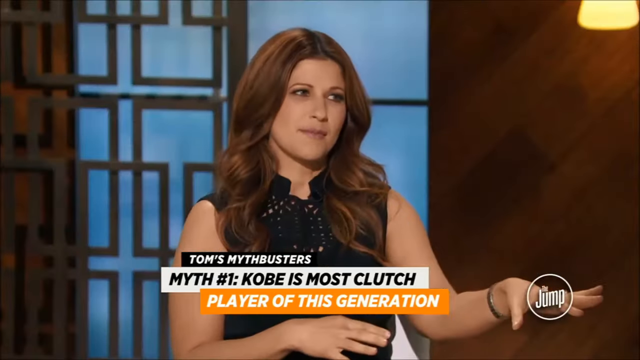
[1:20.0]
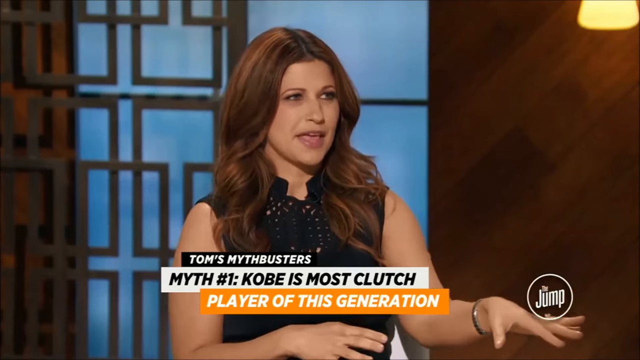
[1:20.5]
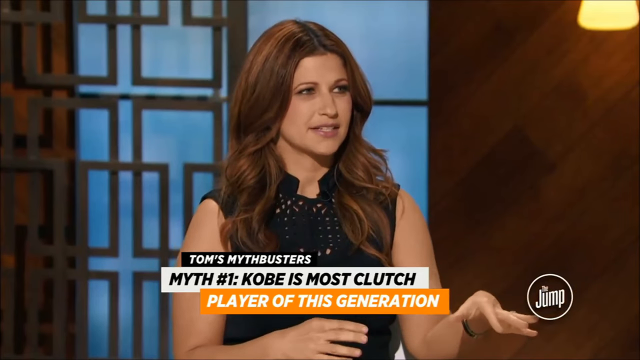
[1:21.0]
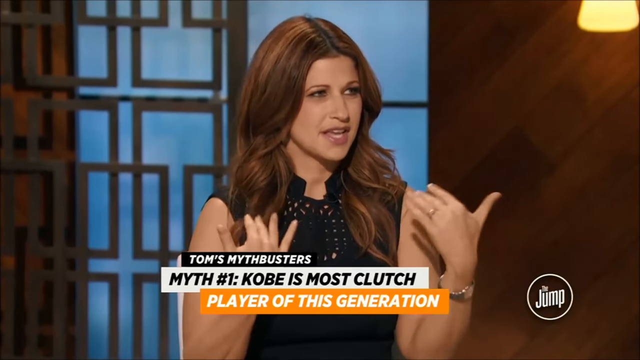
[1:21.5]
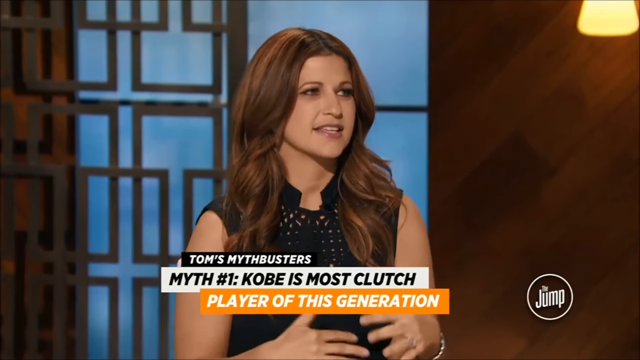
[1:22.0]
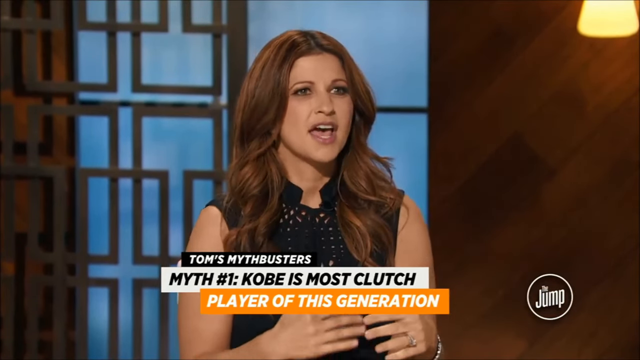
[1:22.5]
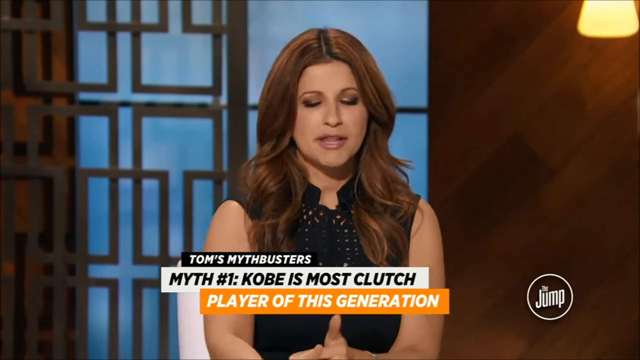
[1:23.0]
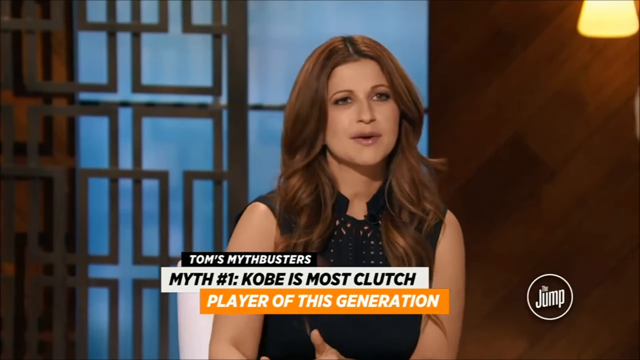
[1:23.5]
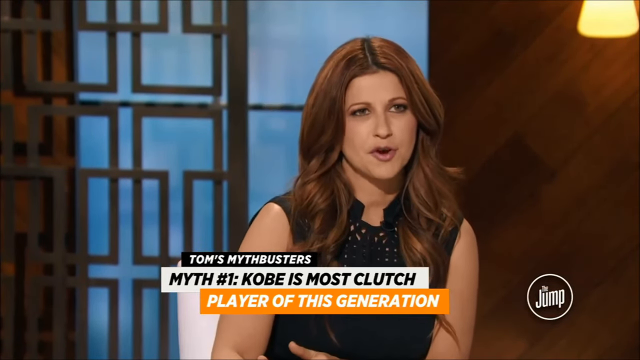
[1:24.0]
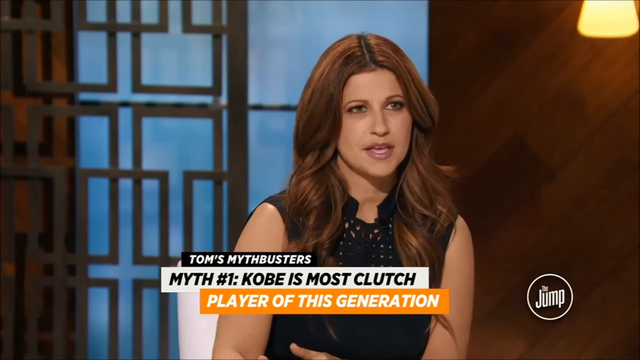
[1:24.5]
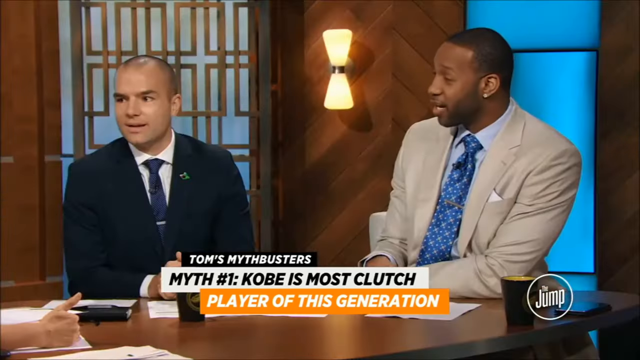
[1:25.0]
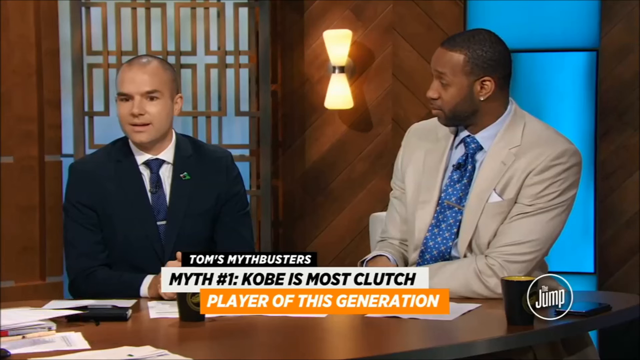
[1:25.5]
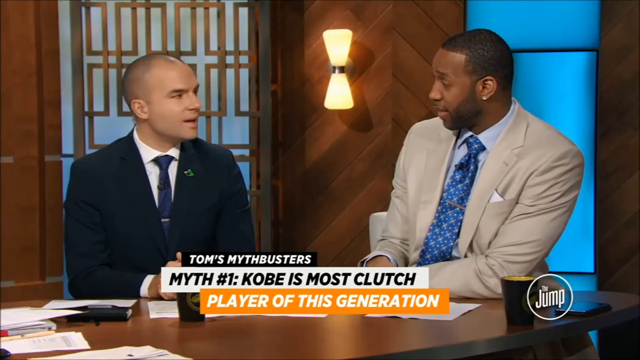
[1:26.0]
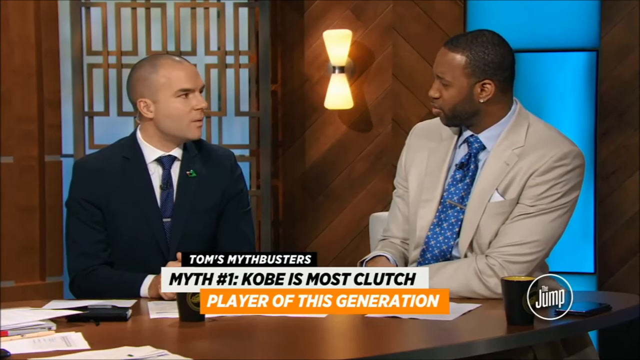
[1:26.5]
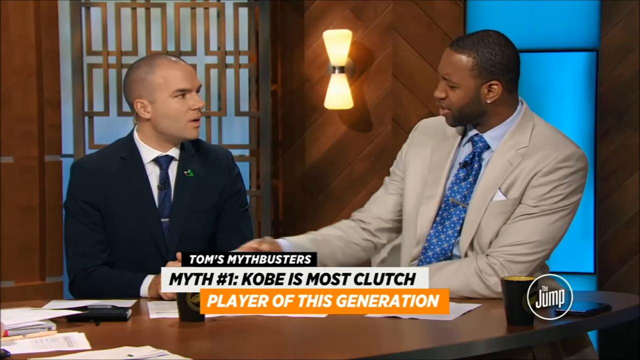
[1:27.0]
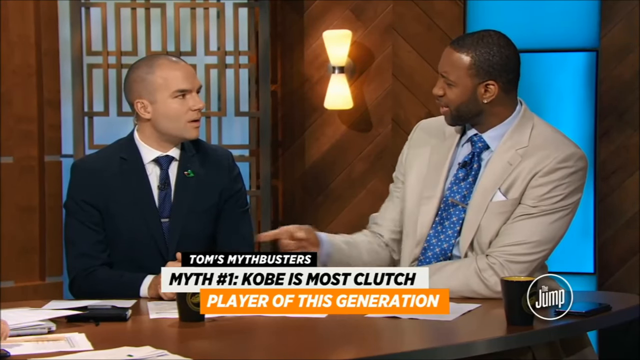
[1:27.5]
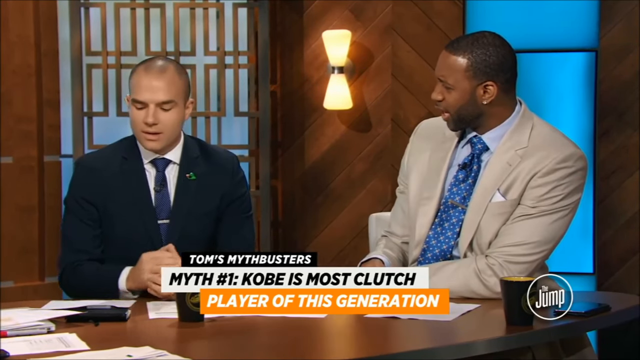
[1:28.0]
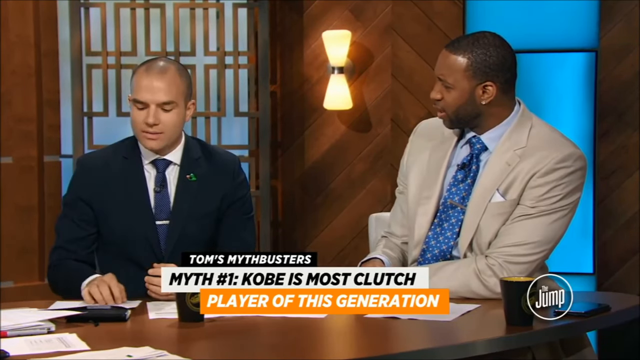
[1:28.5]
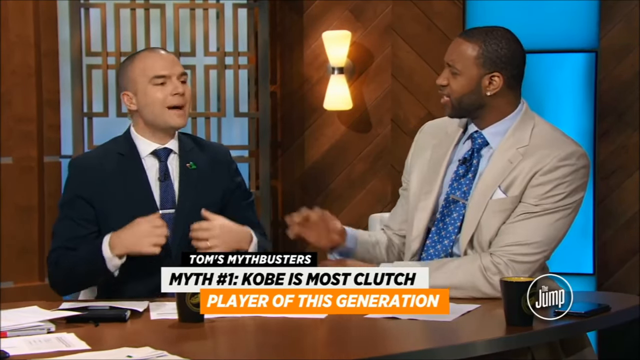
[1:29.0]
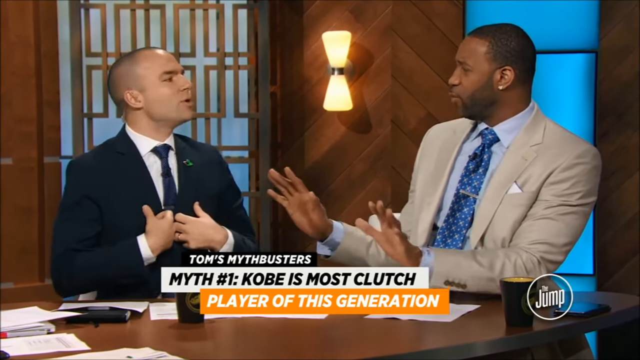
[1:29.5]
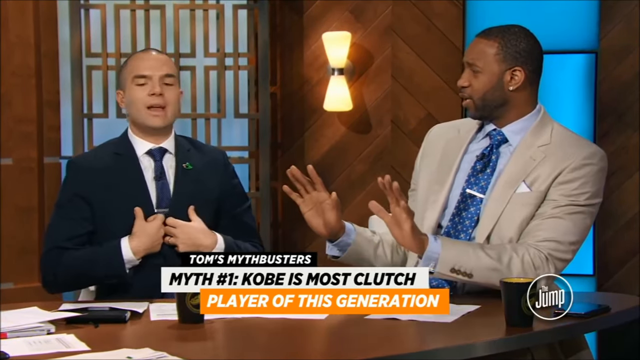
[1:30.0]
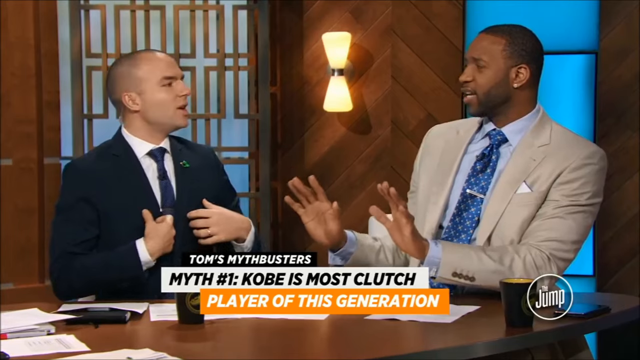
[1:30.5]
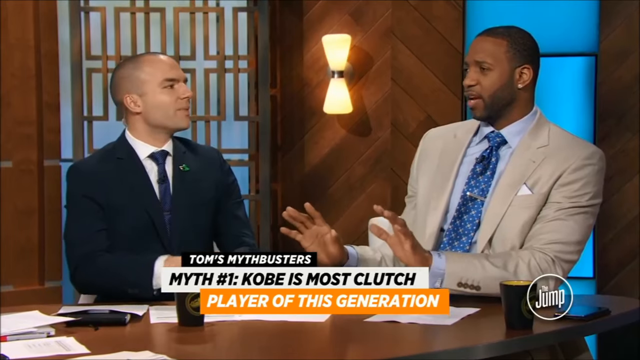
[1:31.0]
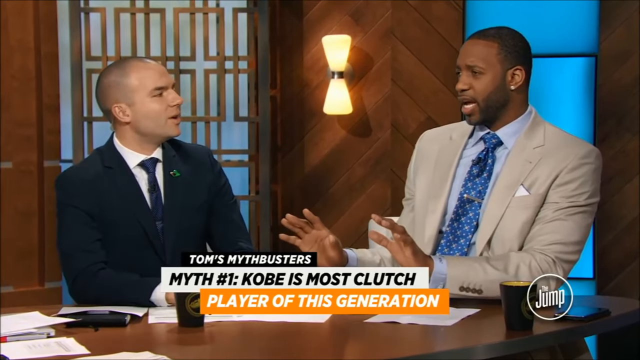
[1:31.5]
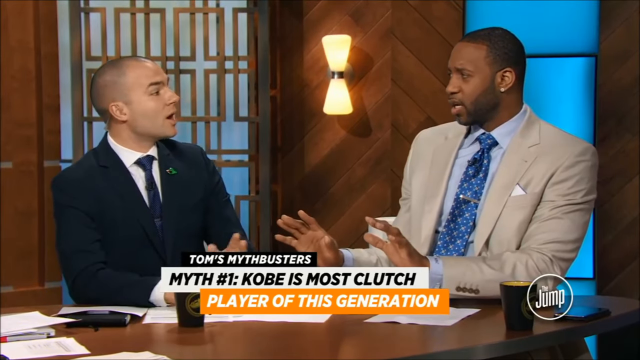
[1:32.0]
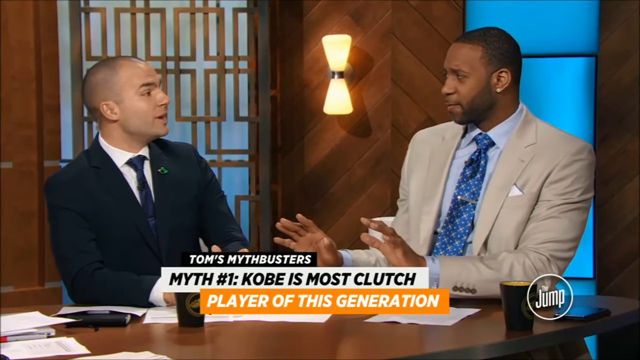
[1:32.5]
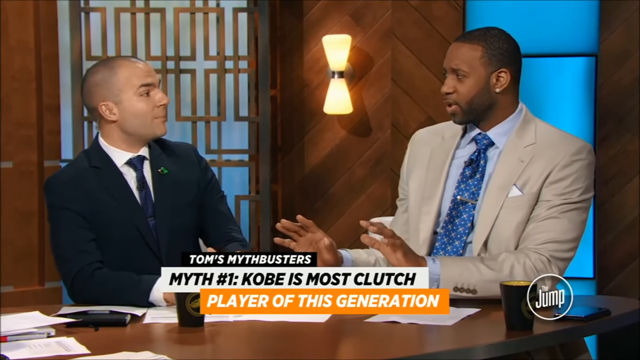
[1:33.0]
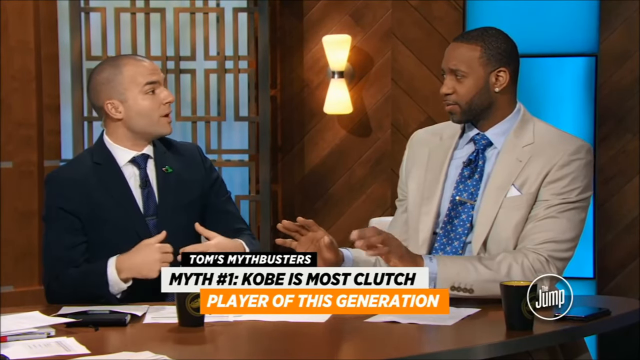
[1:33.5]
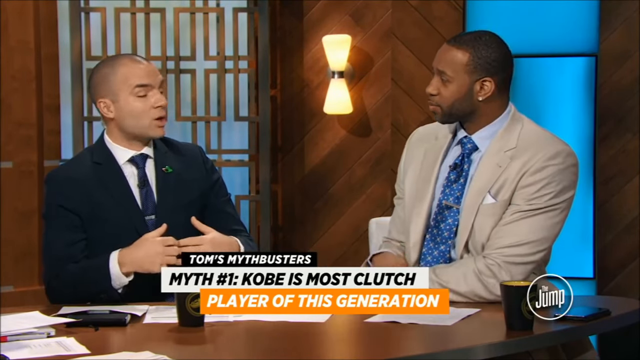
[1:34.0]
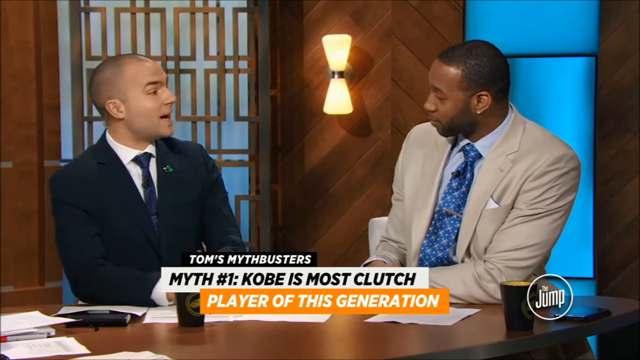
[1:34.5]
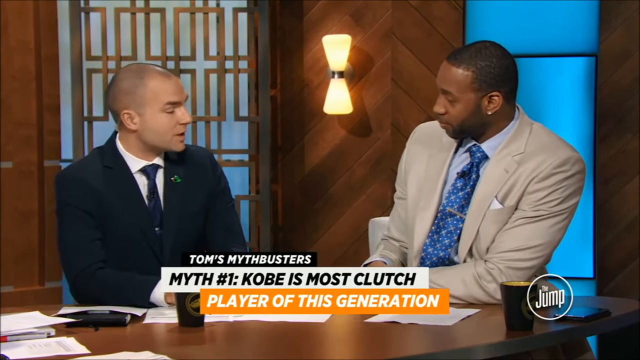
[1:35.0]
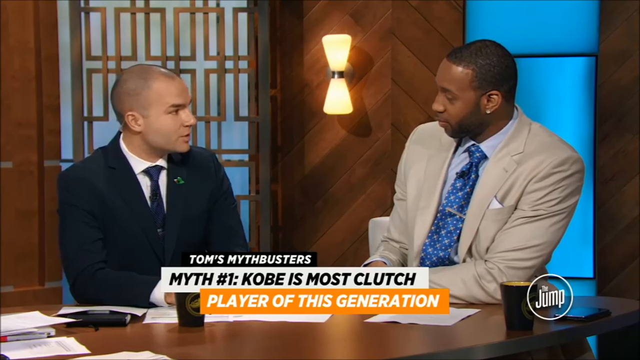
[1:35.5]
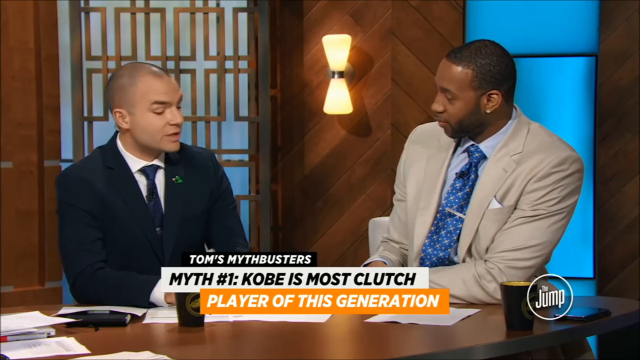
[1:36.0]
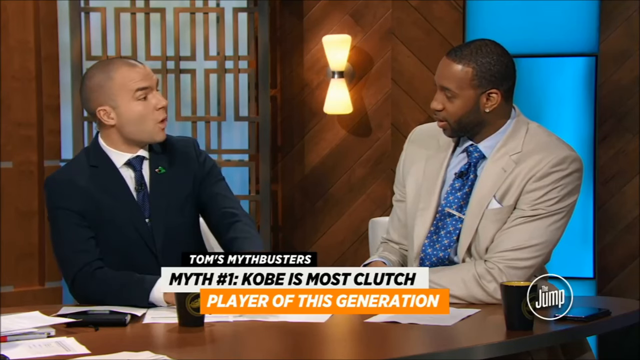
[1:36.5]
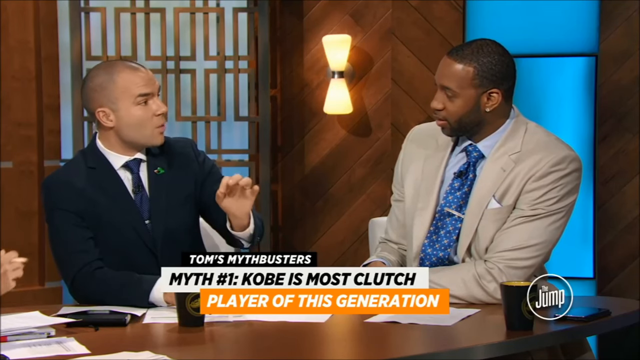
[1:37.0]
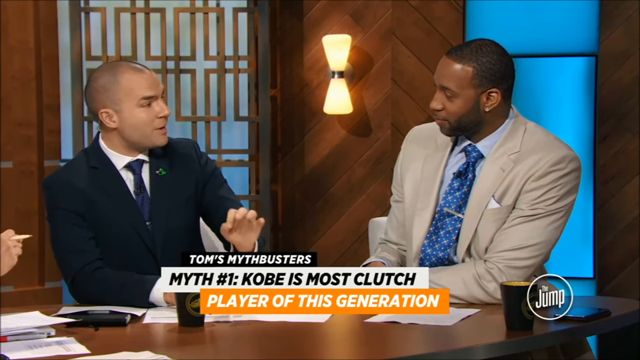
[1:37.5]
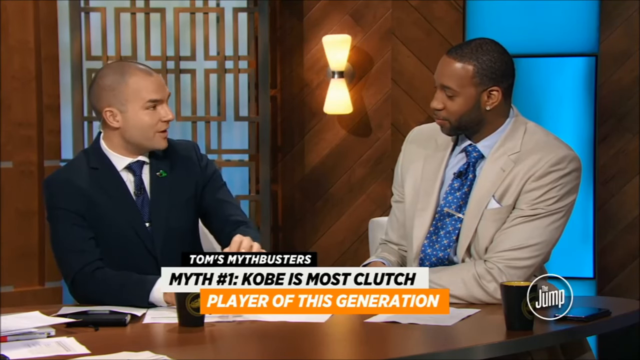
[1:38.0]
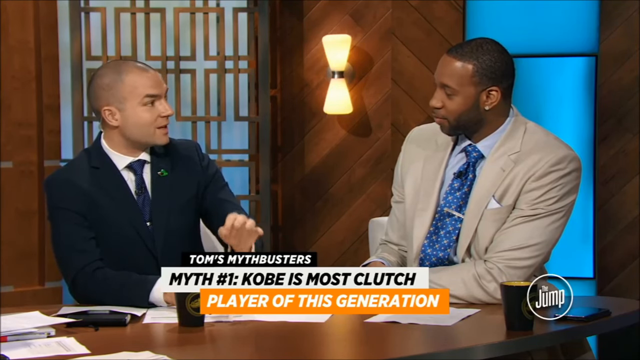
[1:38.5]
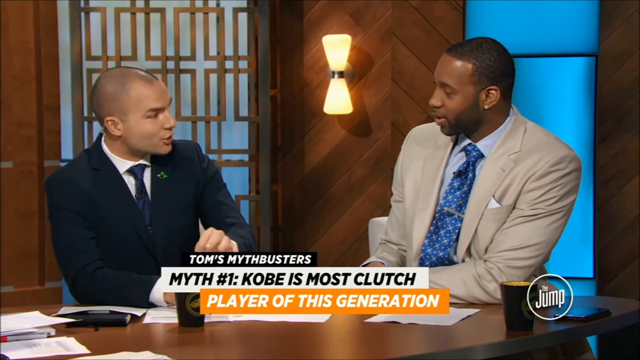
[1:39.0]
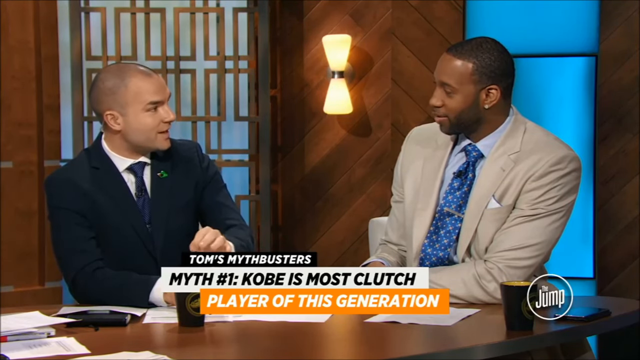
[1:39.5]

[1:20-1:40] The focus is on the woman, who wears a cut-off blouse that leaves a little of her shoulders exposed, a couple of different bracelets on her left wrist, and something with mesh holes above her collar. Her auburn, curly hair goes a little past her shoulders; it looks curled while the rest is straight, and it is shiny. Behind her, lines run around and form mostly upside-down Ts. She keeps speaking, using her hands with her thumbs pointed up a little, leaning in as she talks, her eyes on the man across from her, the Black man in the sand suit. The view then moves to the two men. The white man looks a little more toward her, while the Black man seems to be talking to her but his eyes are on the man to his right. The Black man leans back a little, resting his body on his left elbow, and points, almost touching the other man, who looks at his documents. They appear to be having a friendly conversation about something they disagree on.